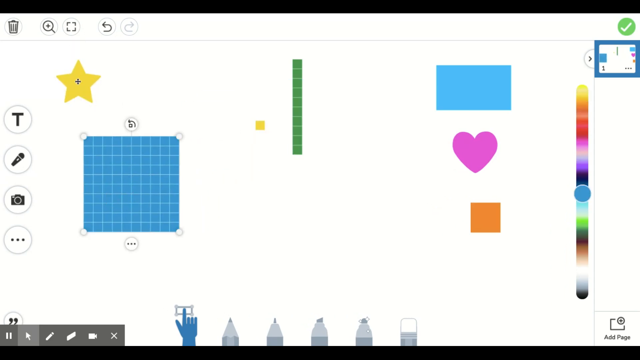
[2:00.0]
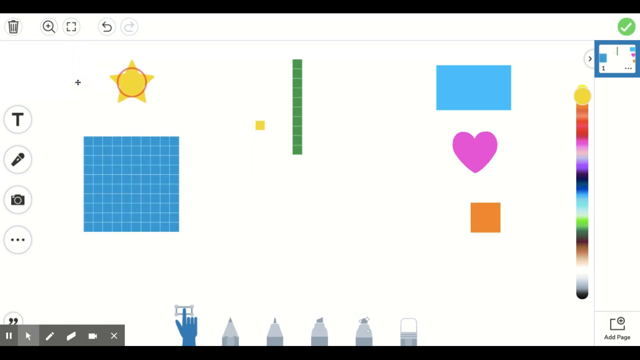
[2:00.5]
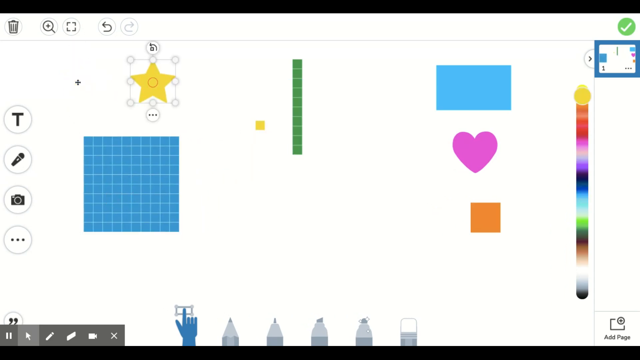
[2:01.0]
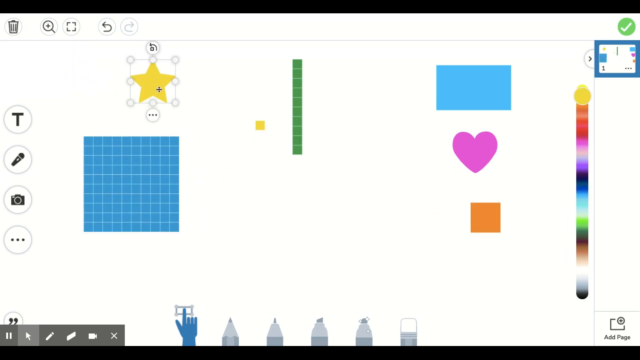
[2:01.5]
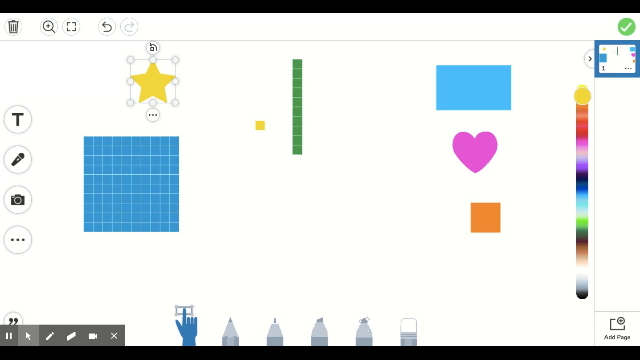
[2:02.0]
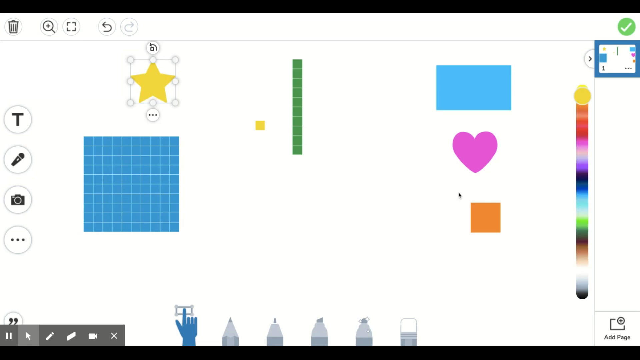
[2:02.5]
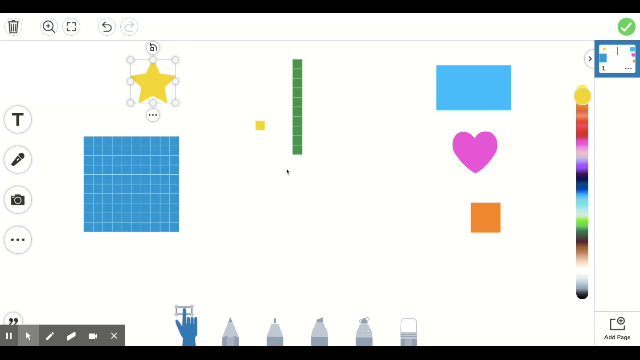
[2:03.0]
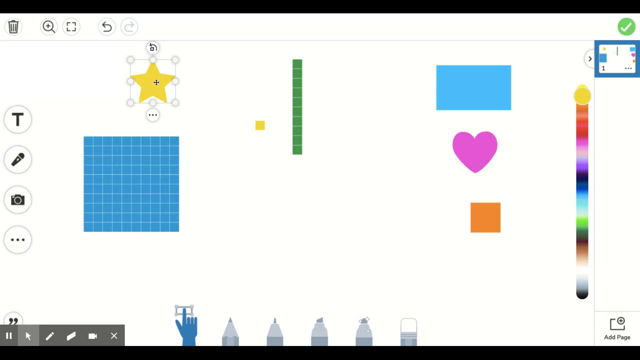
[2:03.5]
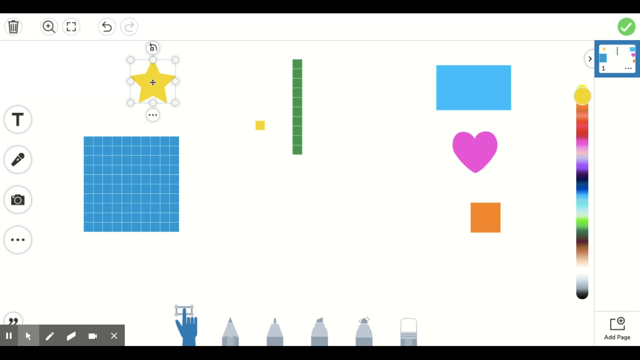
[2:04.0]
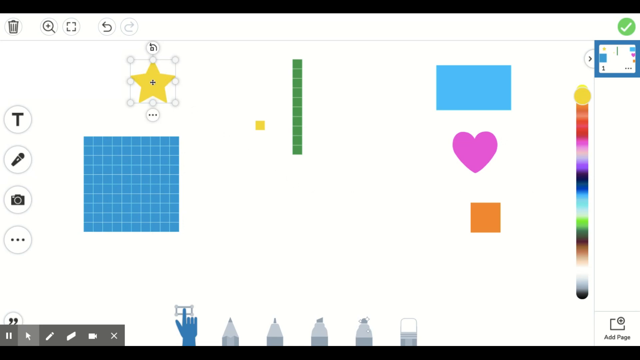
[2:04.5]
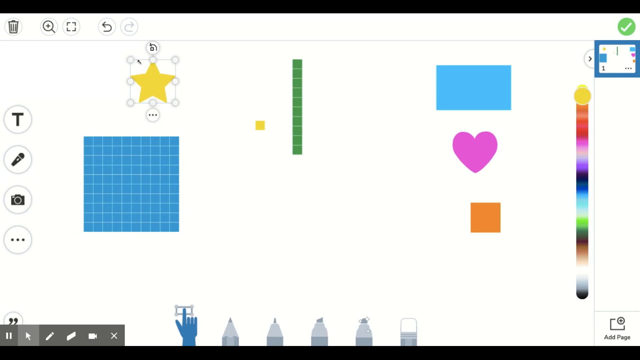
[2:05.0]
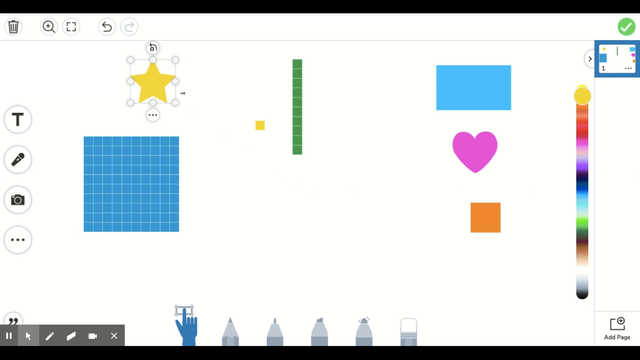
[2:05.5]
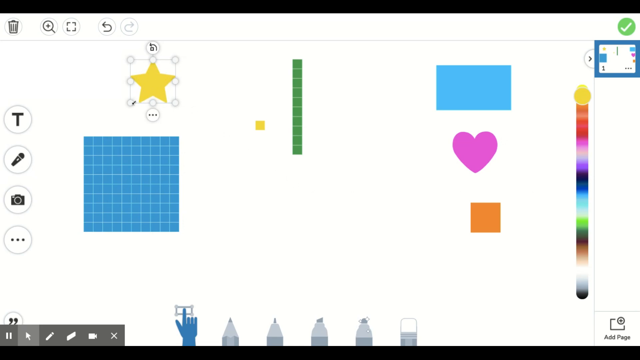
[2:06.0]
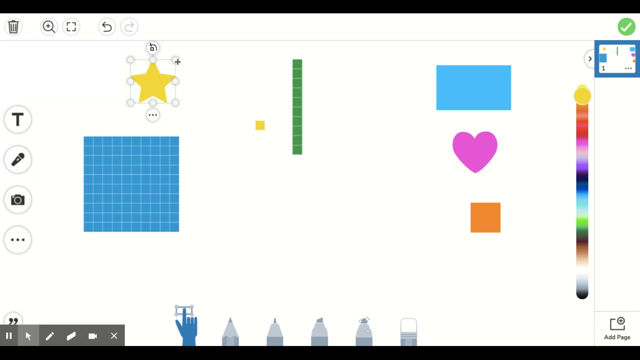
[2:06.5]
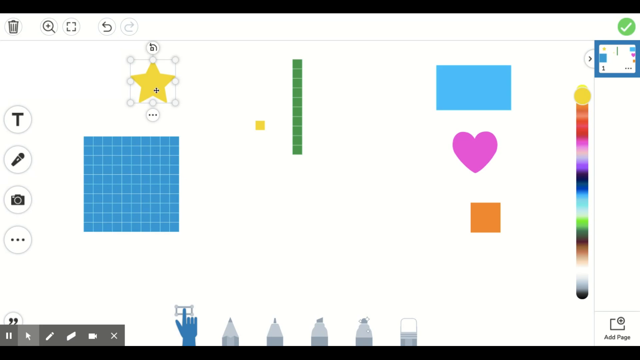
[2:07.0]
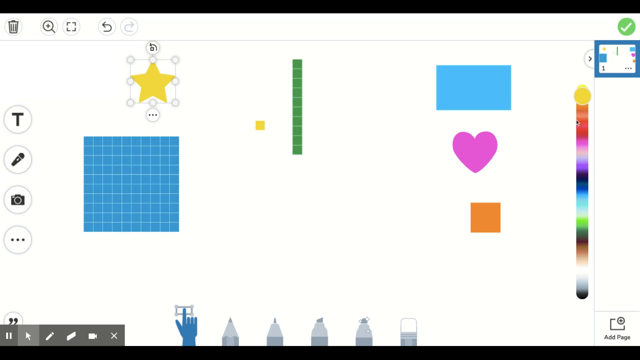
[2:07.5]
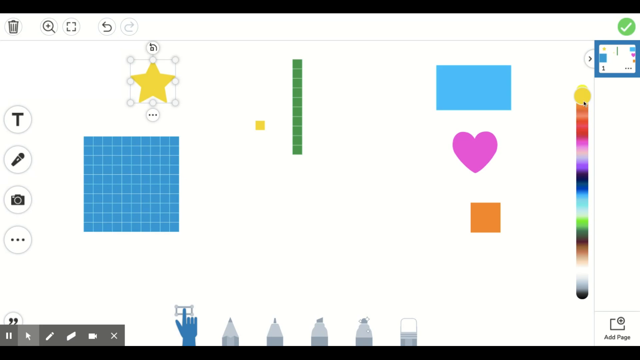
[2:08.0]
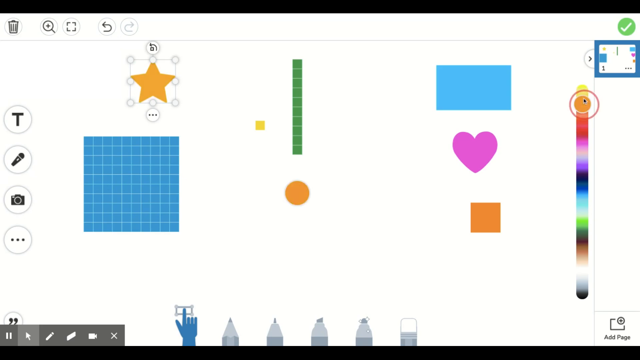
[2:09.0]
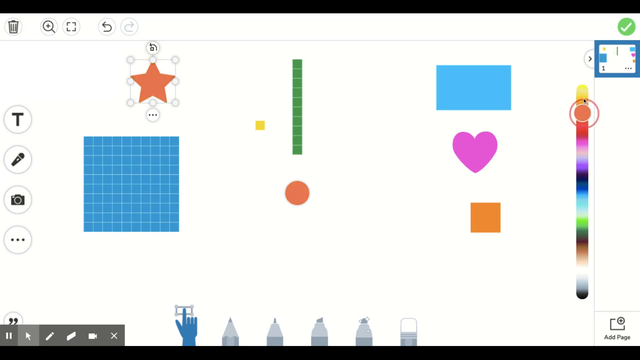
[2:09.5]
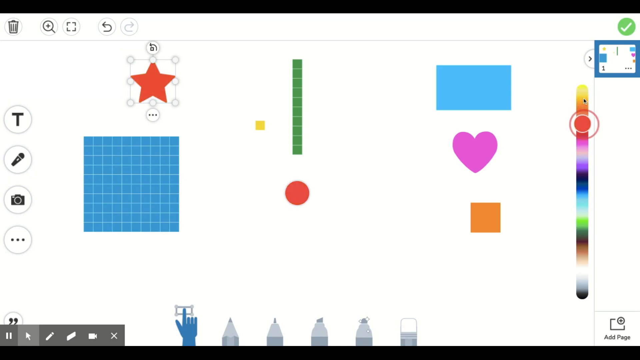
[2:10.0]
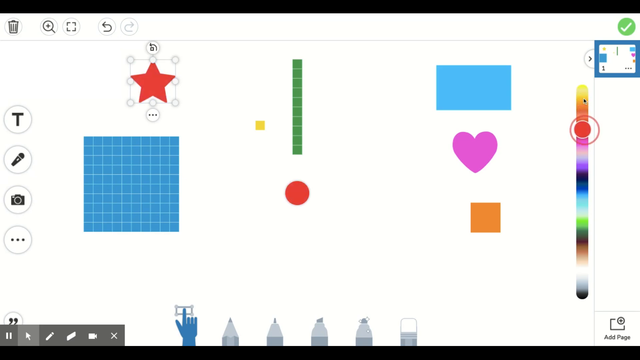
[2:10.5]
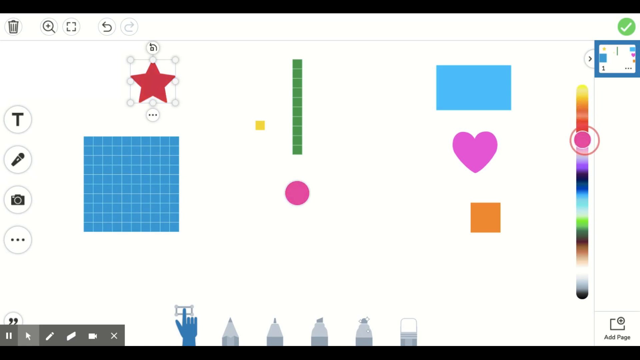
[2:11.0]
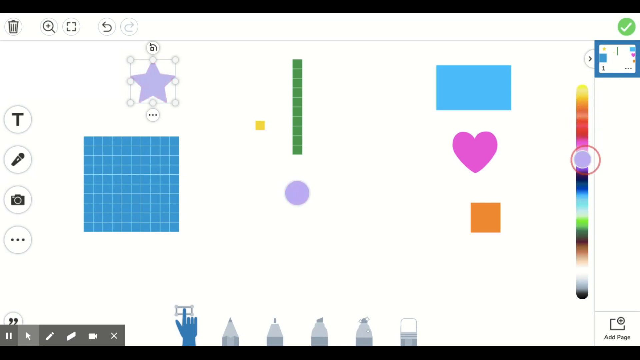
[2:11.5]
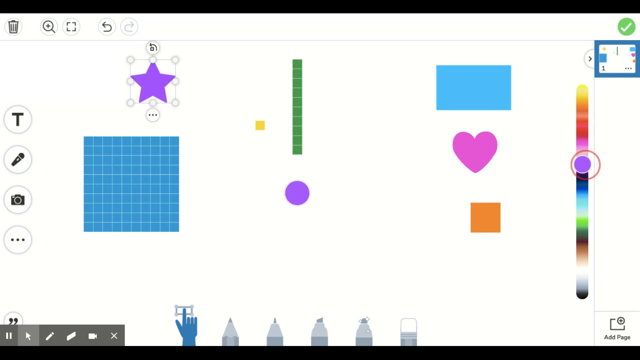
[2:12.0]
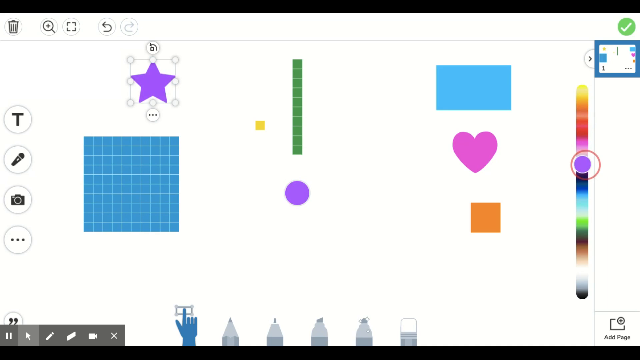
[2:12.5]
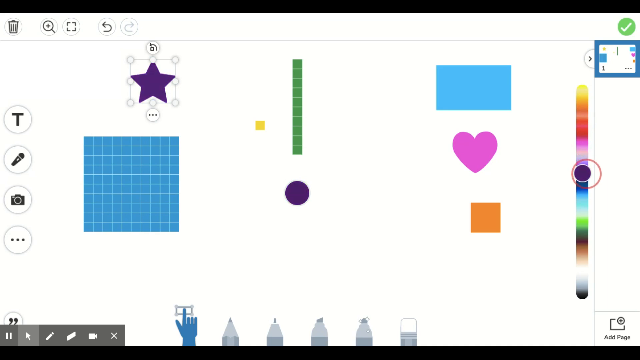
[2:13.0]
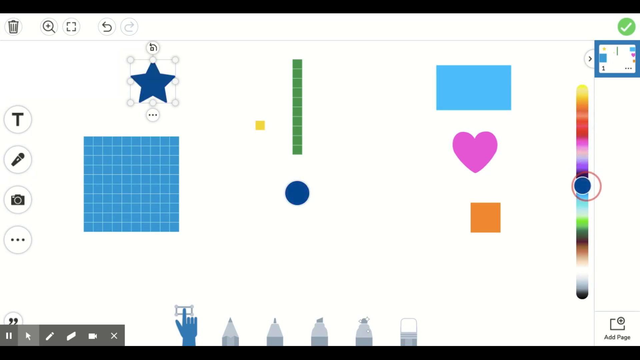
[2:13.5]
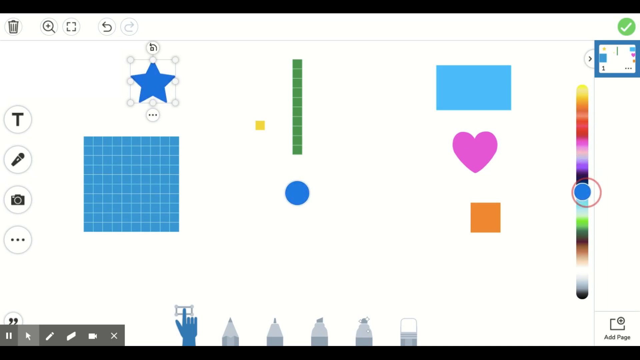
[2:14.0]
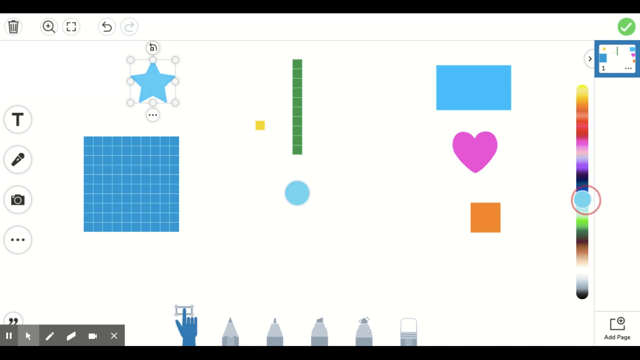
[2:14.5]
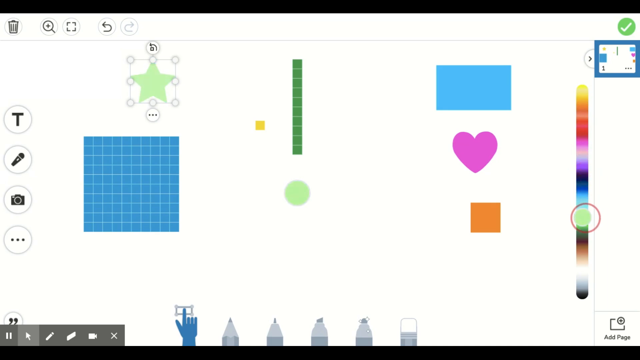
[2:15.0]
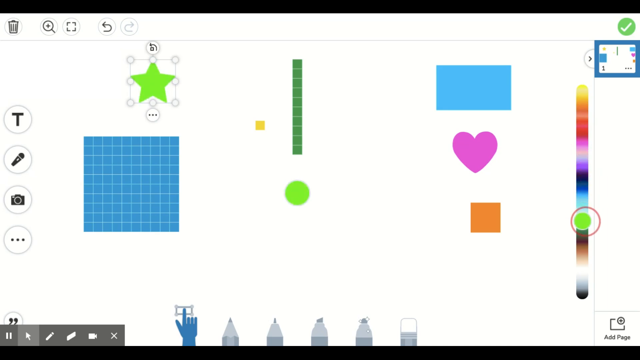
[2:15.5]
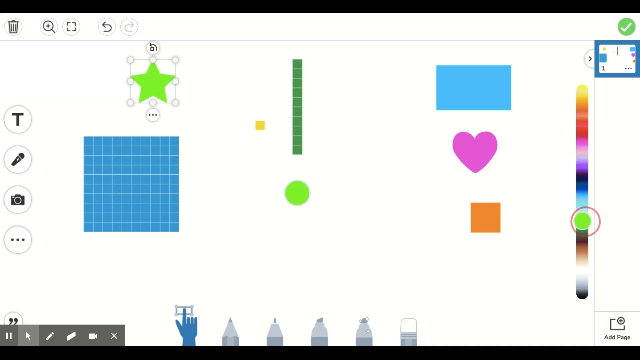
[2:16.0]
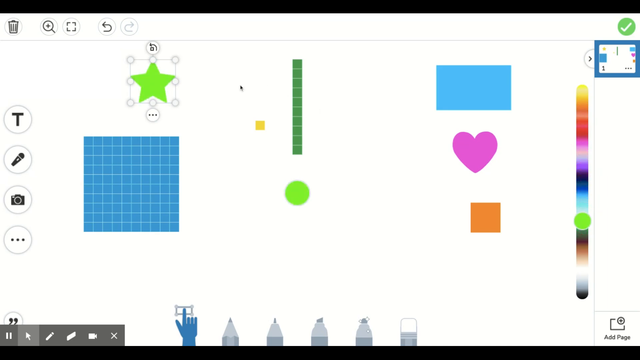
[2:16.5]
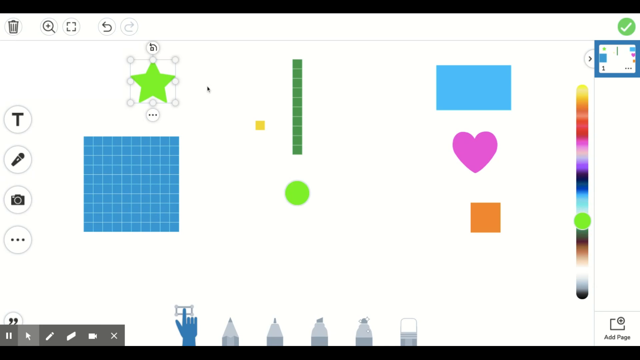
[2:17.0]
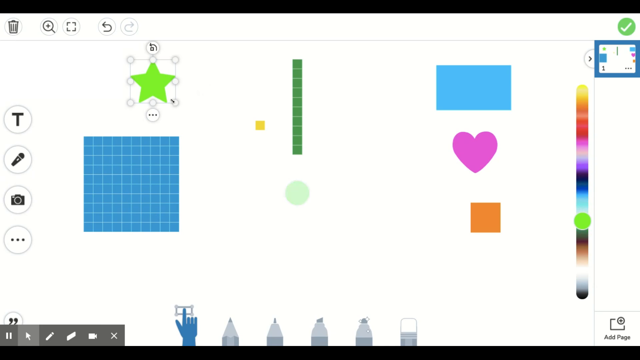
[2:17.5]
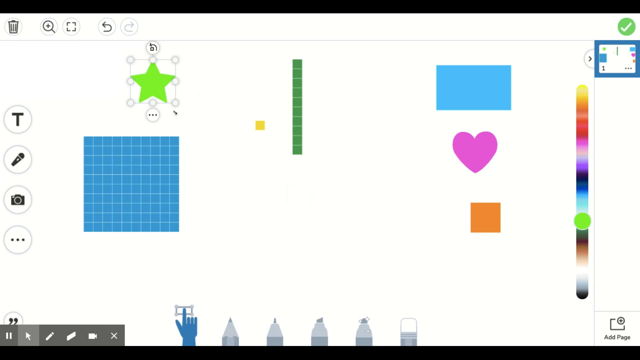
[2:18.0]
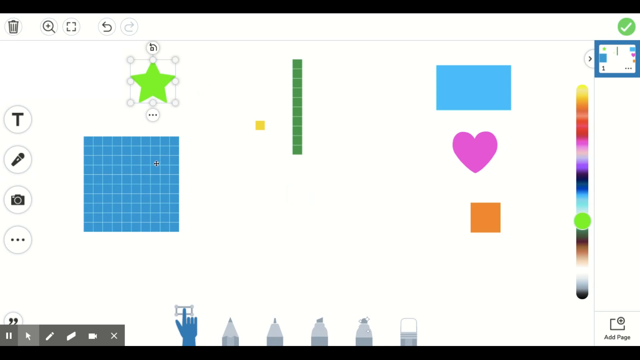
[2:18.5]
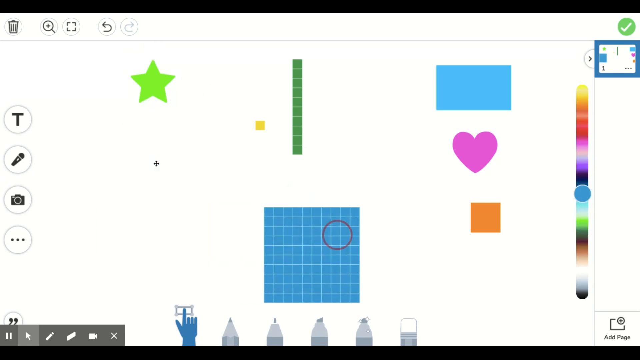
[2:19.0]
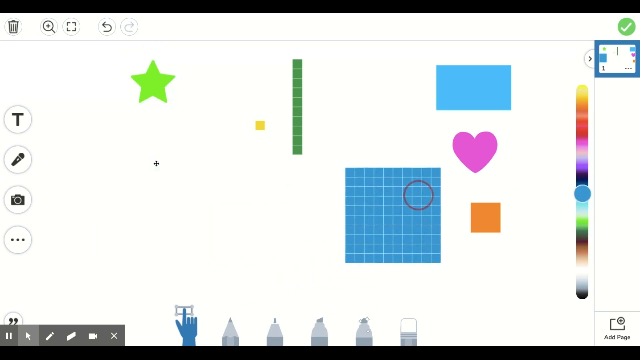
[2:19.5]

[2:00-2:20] A whiteboard-type tool has a number of shapes spread out in the middle, including squares and rectangles, with color gradient options on the right, drawing utensils at the bottom, and other options such as a microphone and camera along the left edge. The user selects and moves the yellow star around the page, then clicks it to highlight its edges, showing the lines and circles surrounding it. The cursor moves to the color gradient and drags through it, and the selected star's color changes at the same time; the user leaves it neon green. The user also clicks and moves the blue square to a different part of the page.